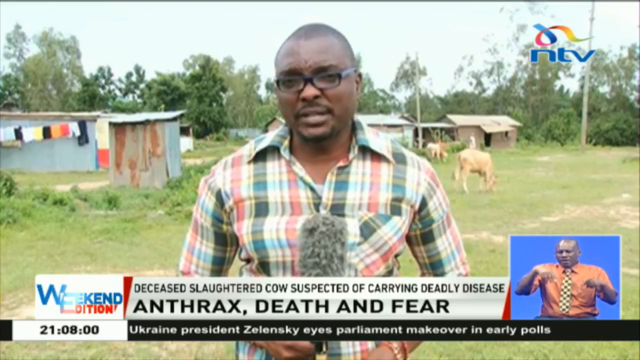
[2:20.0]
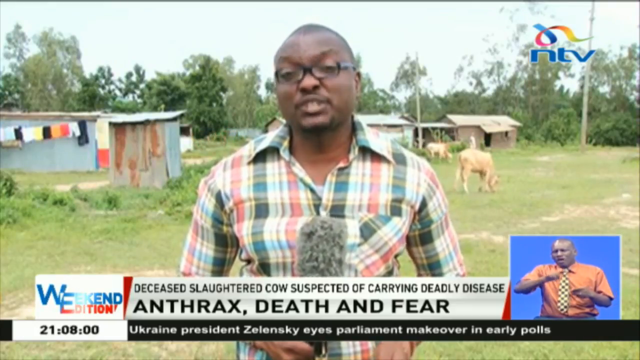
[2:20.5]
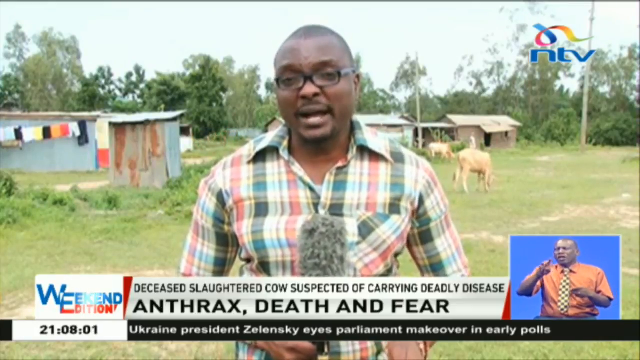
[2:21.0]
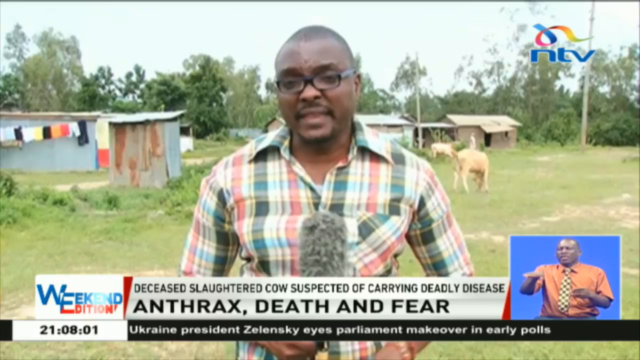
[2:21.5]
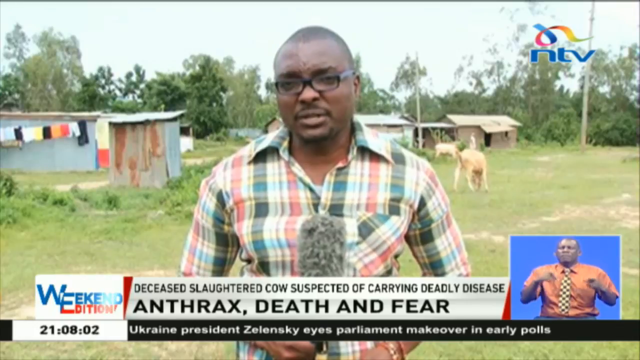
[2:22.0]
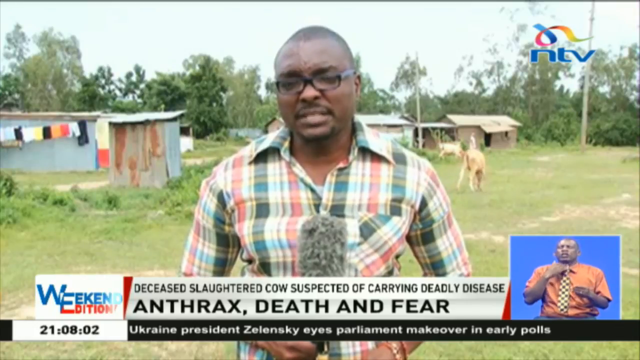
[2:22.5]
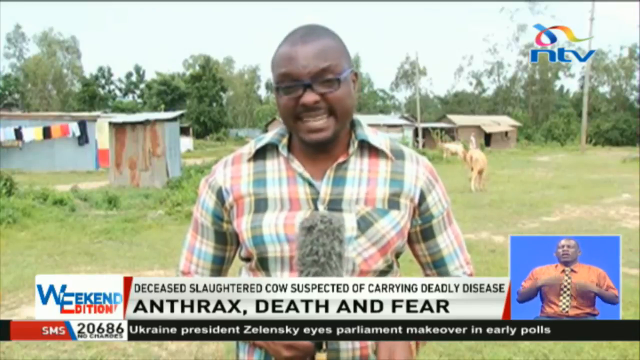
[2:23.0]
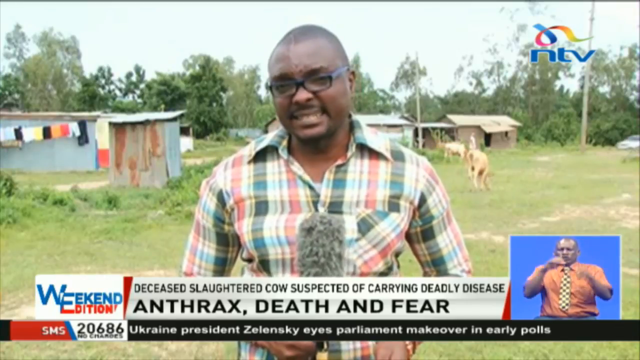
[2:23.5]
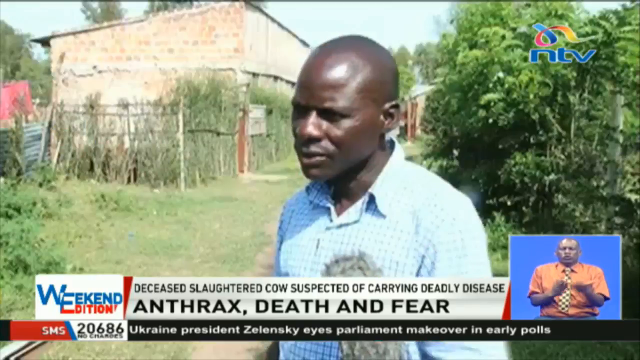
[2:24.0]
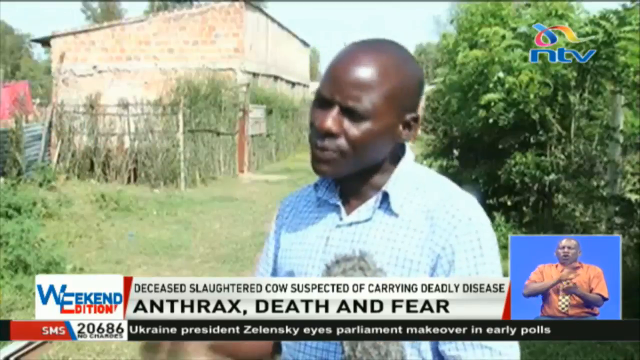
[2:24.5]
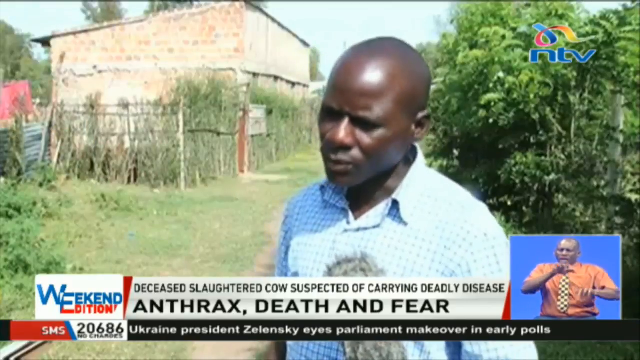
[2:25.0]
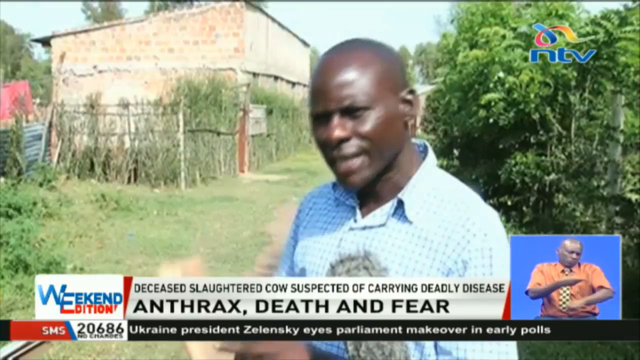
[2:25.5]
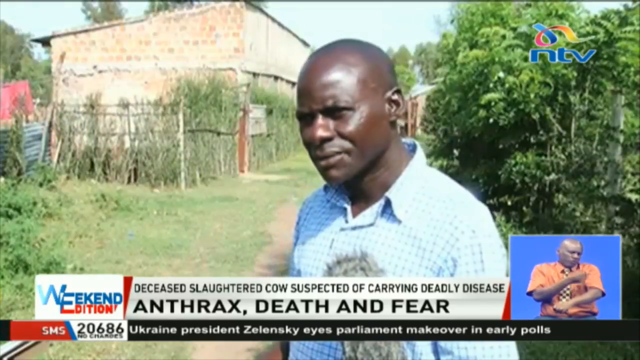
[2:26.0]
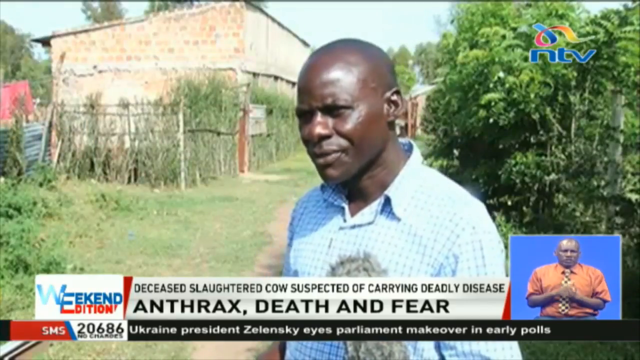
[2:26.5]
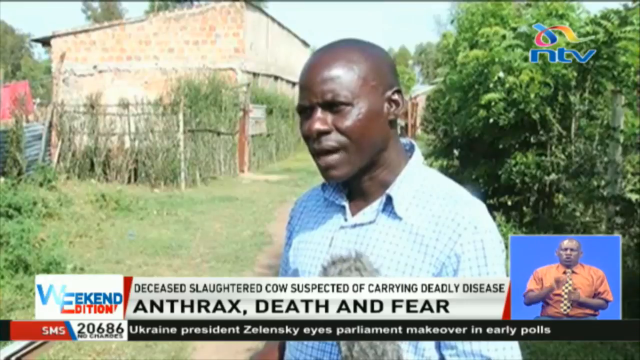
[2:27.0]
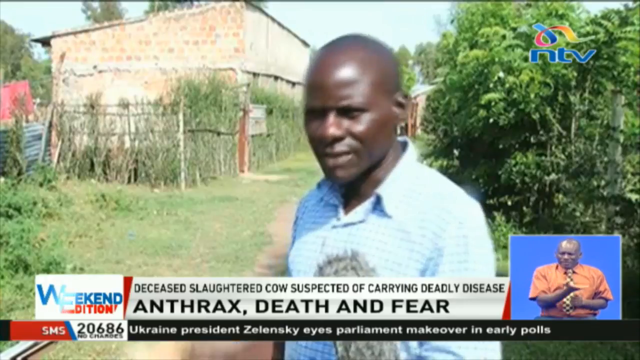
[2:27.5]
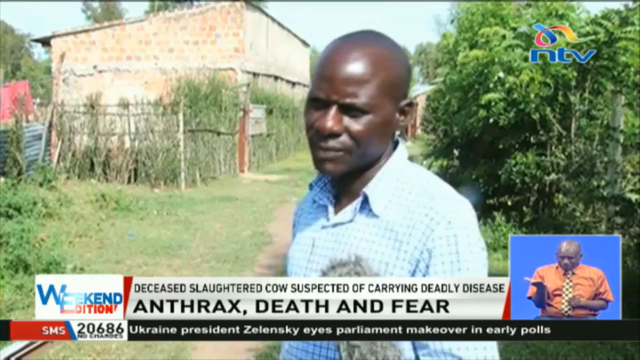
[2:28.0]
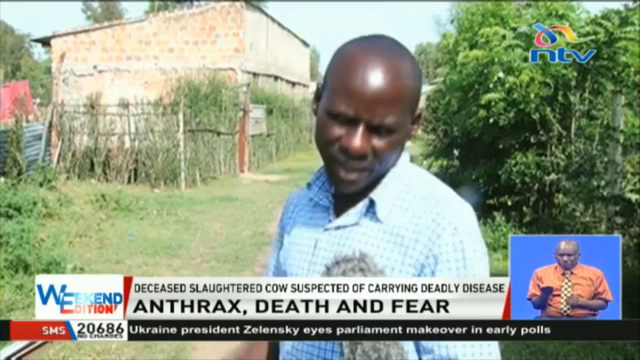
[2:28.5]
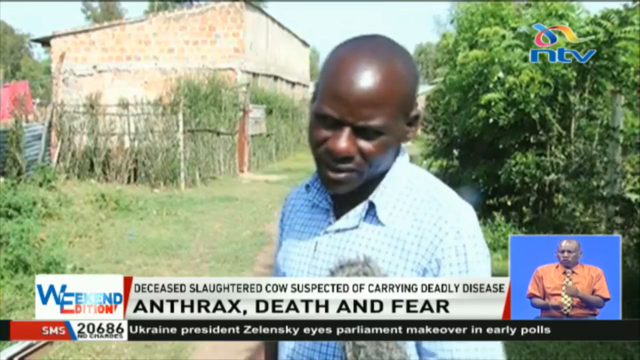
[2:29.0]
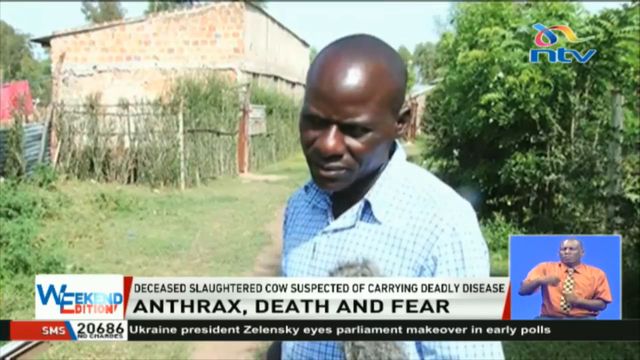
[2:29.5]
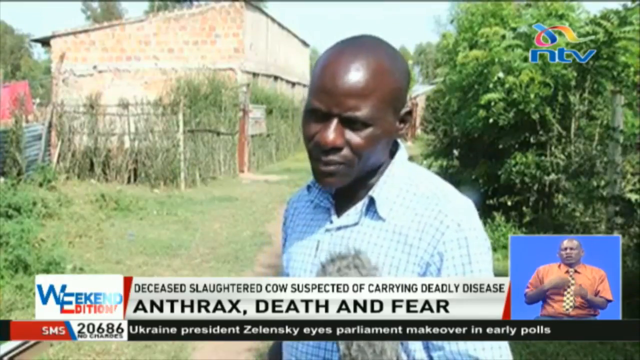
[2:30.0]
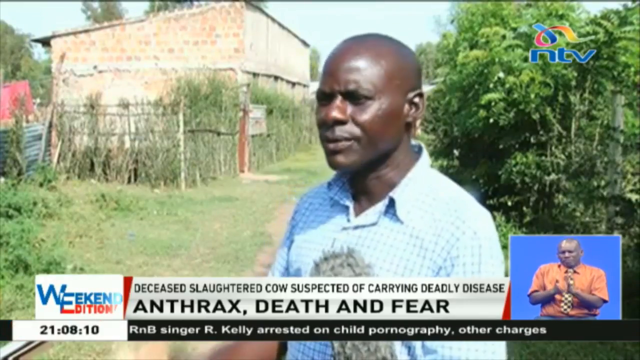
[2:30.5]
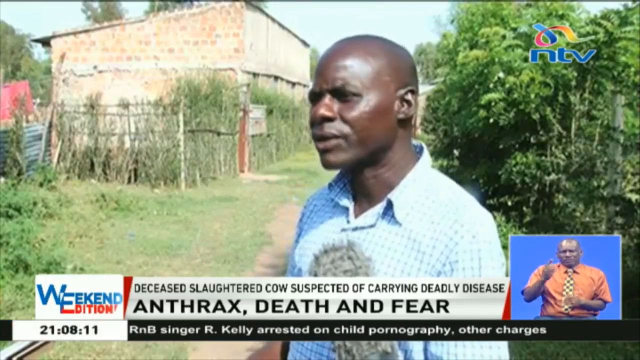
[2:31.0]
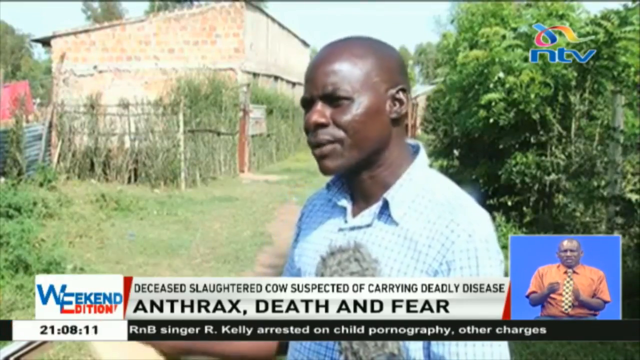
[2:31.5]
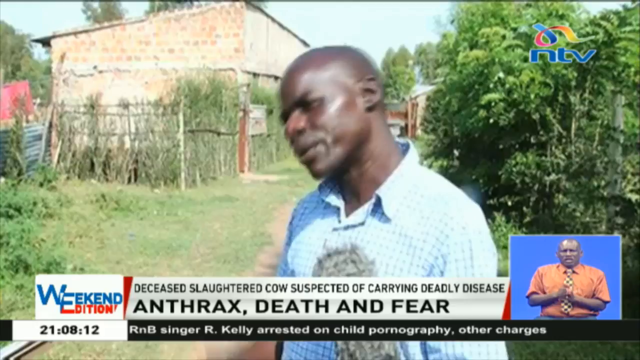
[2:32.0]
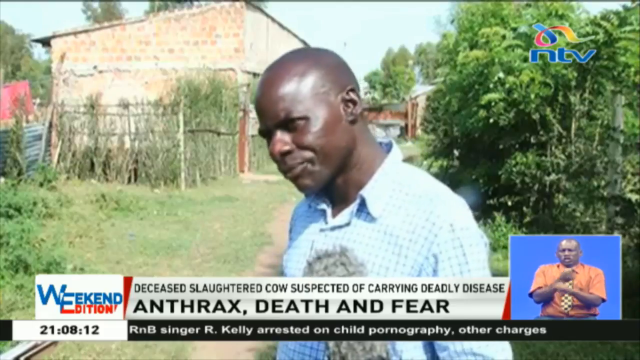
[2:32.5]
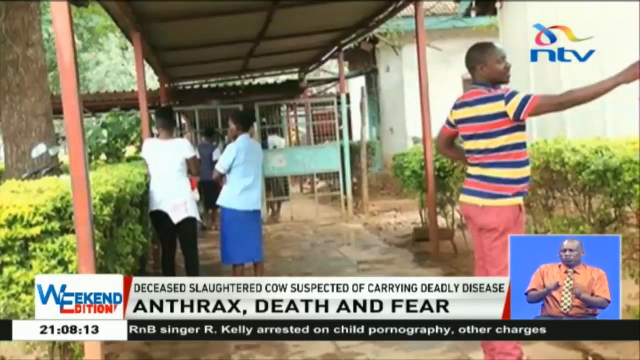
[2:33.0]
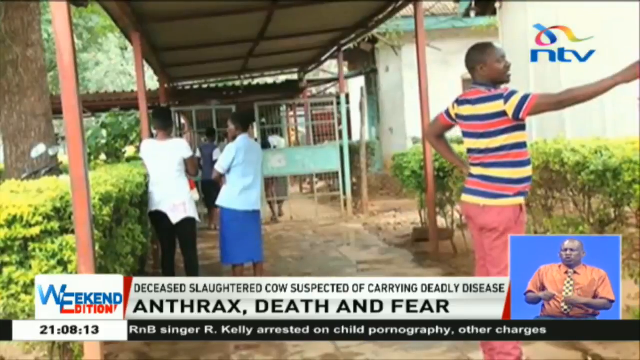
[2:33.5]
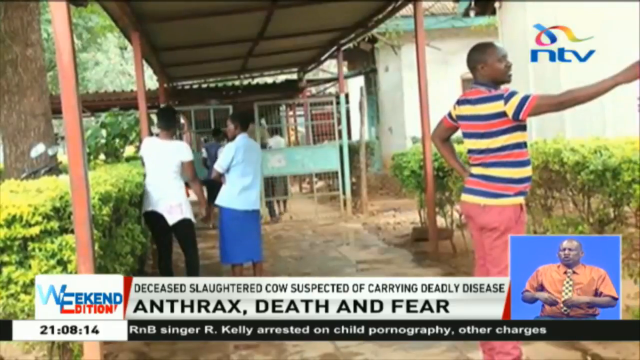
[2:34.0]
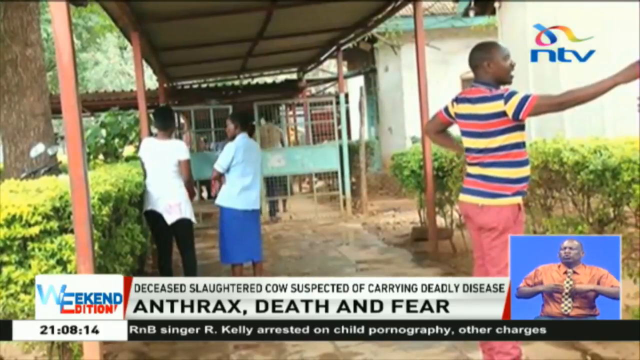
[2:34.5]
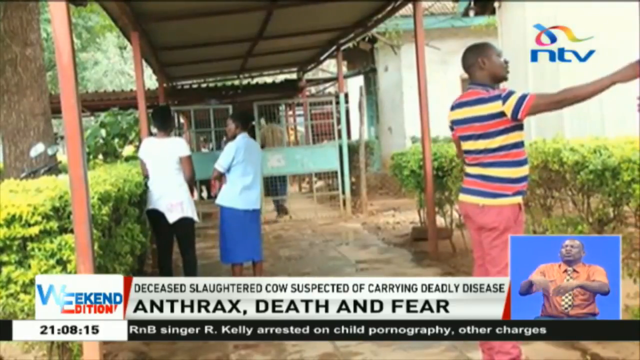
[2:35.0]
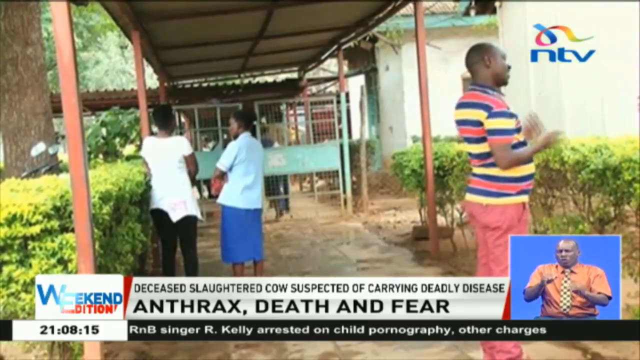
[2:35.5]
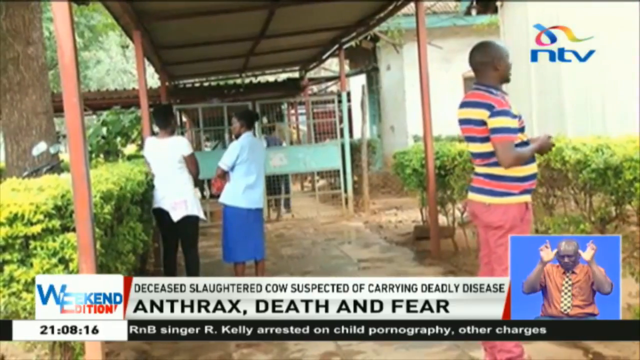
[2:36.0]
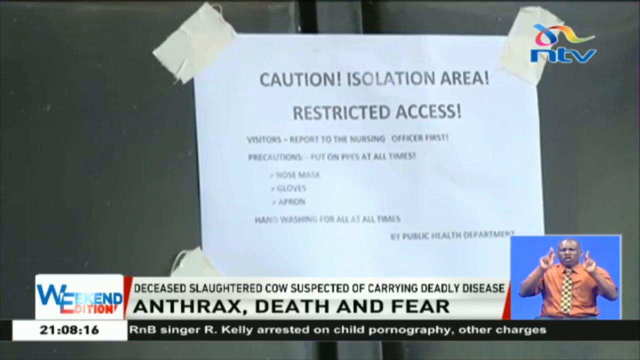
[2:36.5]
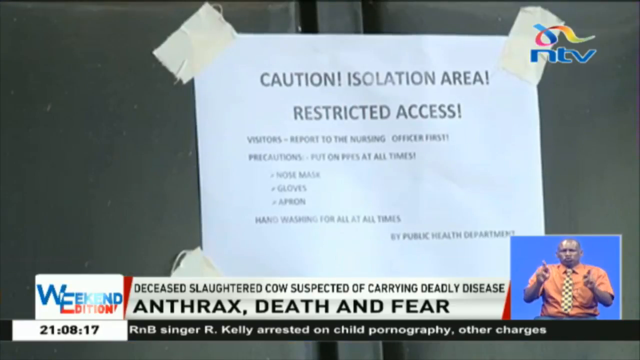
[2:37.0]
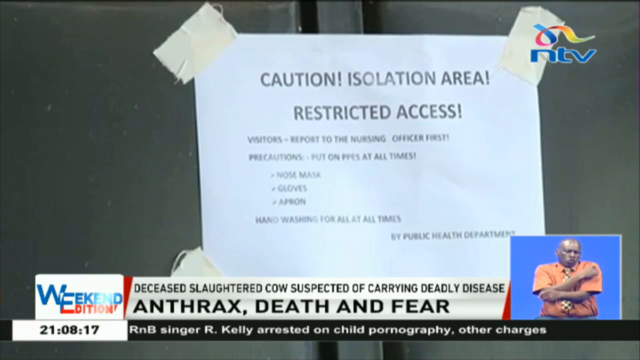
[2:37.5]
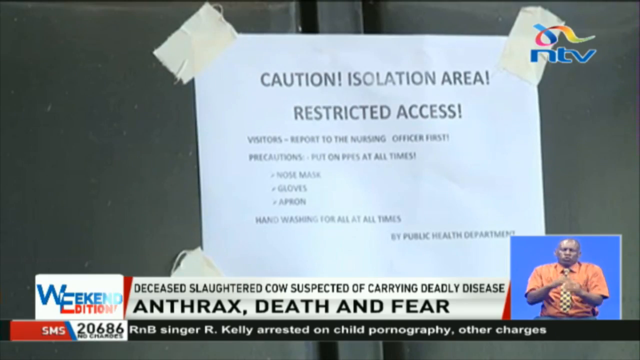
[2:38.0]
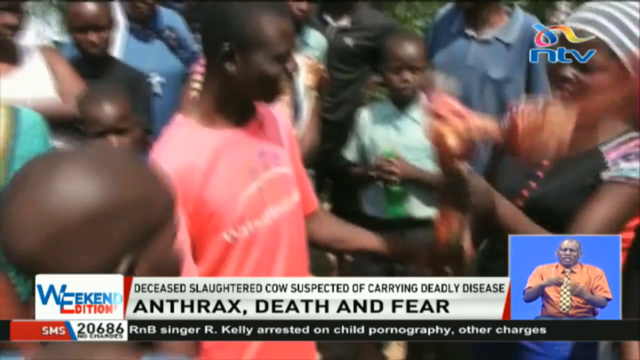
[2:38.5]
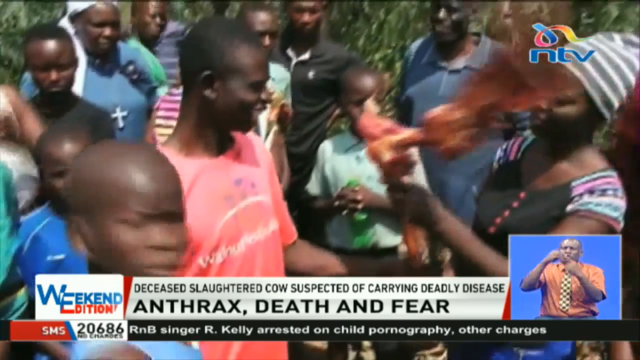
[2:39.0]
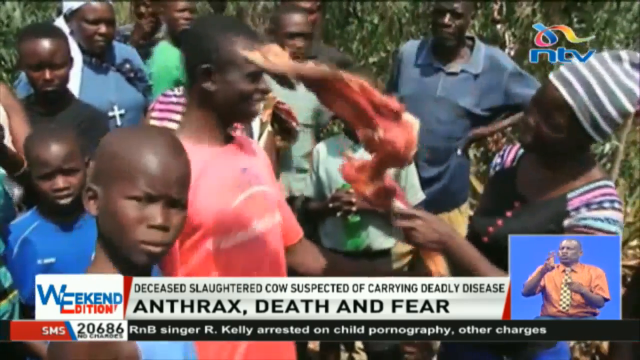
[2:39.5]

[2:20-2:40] A male African reporter speaks to the camera. Behind him is a flat grassy area with some small houses, laundry lines hung up with clothes hanging, and a few small light brown cows grazing. Another man is interviewed: he is bald, wears a blue and white checkered button-up shirt, and stands in an area that looks like it has a small tan-colored brick house to the left and tall green shrubs to the right. He speaks to the reporter while squinting from the sun in his eyes. Next is what looks like a tan building, with a few people waiting outside under a covered walkway. A close-up shows a white paper sign taped onto a black surface that reads "caution, isolation area, Restricted access", followed by other information for visitors and precautions to be taken. Then a group of what look like young African children and some adults appear; one of the women holds a large orangish-red object that kind of looks like some kind of bone, like part of a bird, as the crowd looks on.